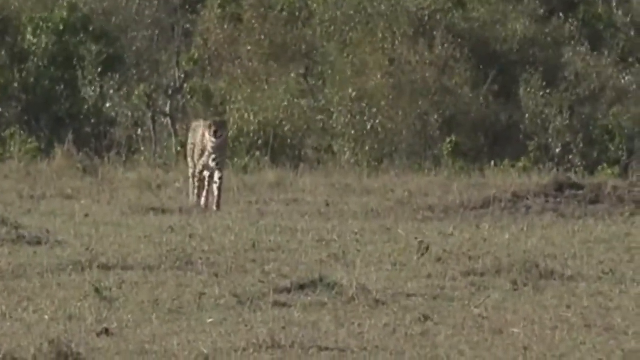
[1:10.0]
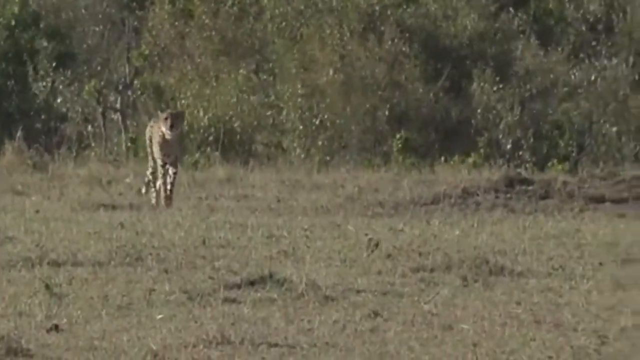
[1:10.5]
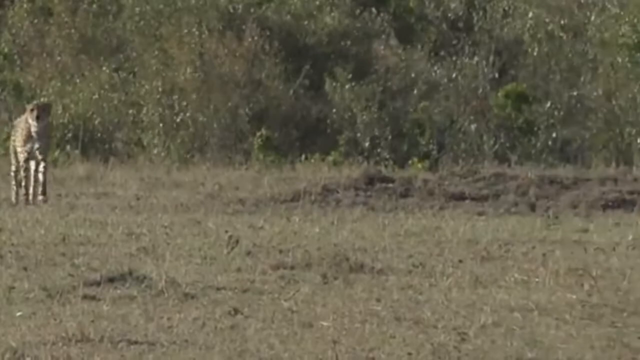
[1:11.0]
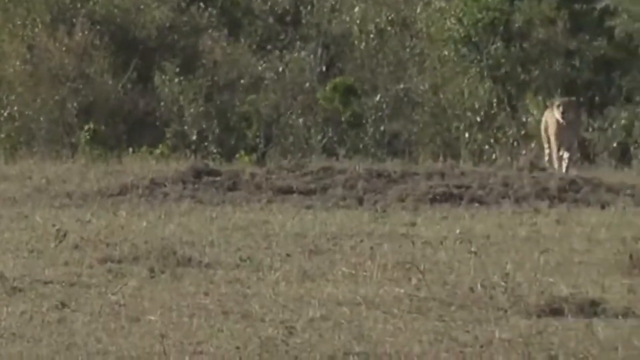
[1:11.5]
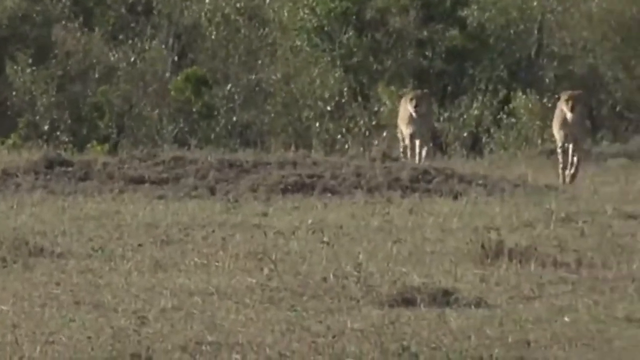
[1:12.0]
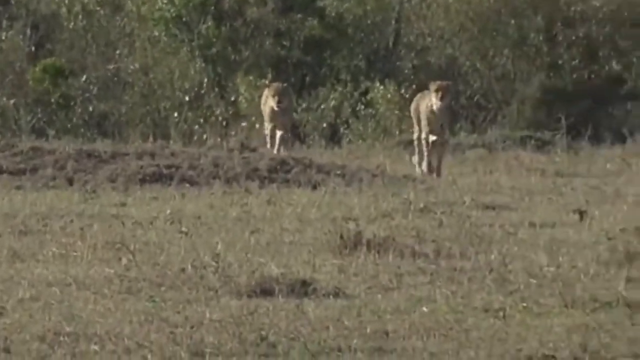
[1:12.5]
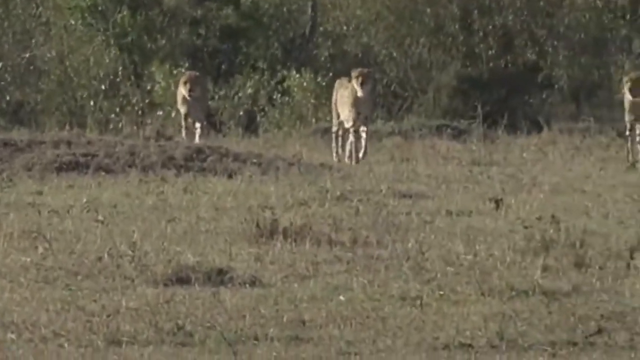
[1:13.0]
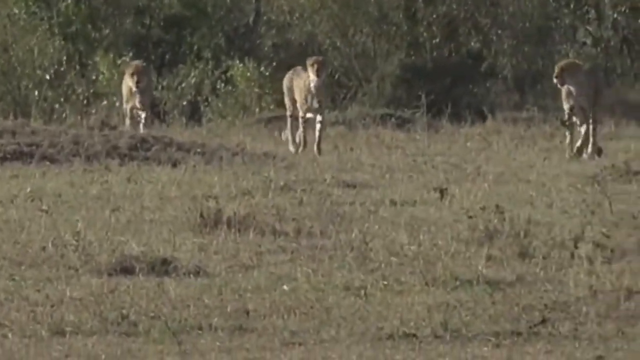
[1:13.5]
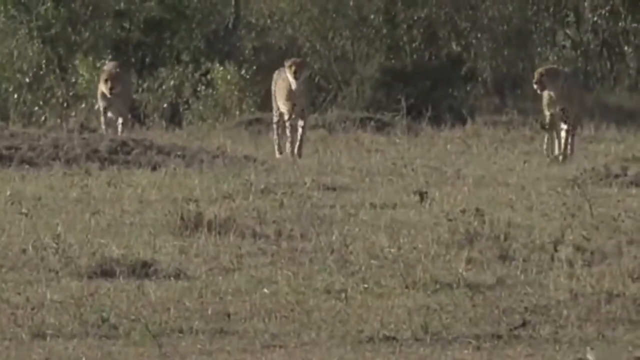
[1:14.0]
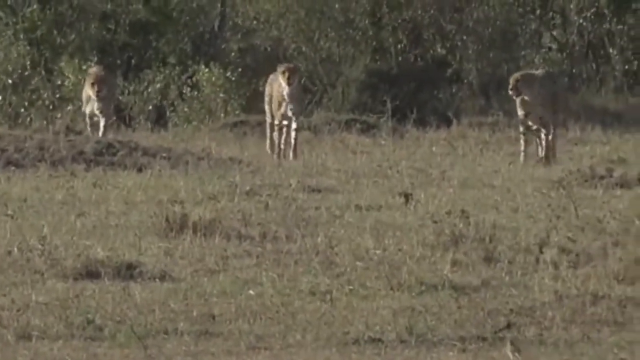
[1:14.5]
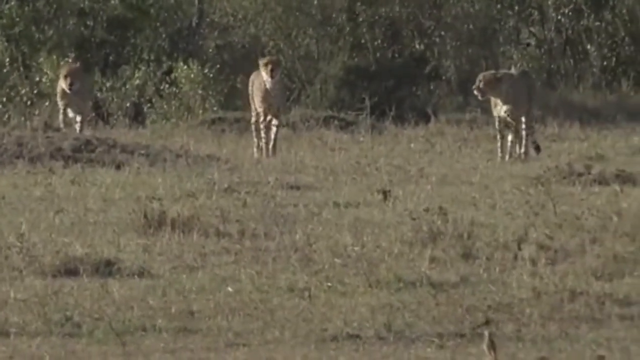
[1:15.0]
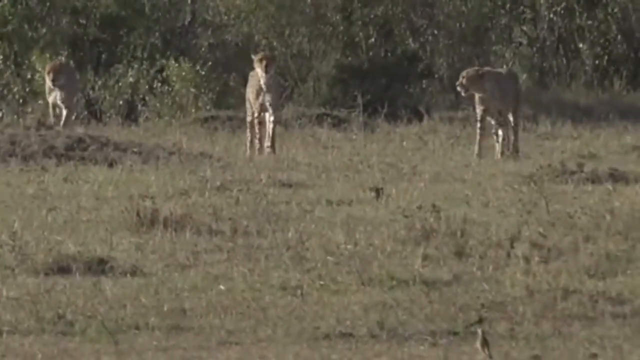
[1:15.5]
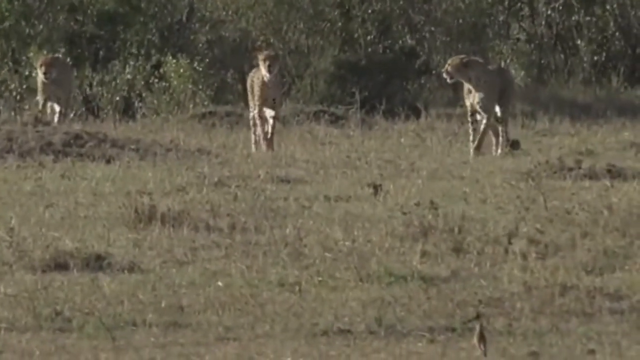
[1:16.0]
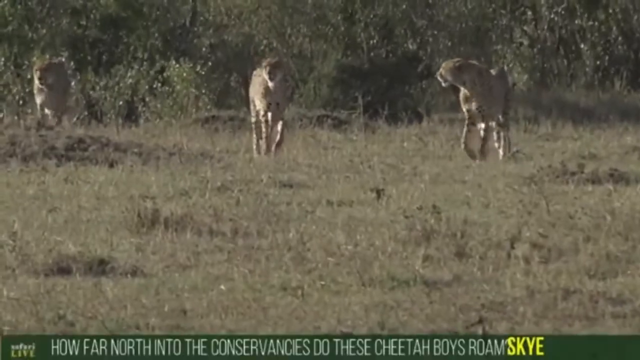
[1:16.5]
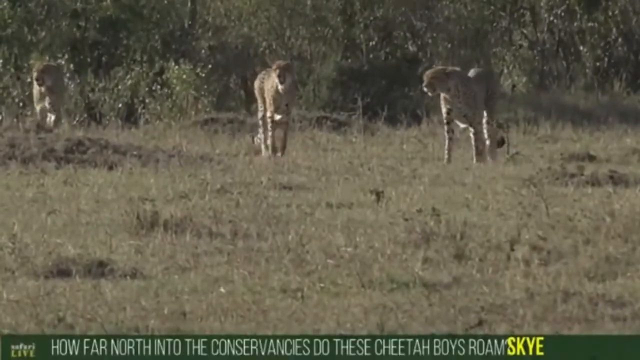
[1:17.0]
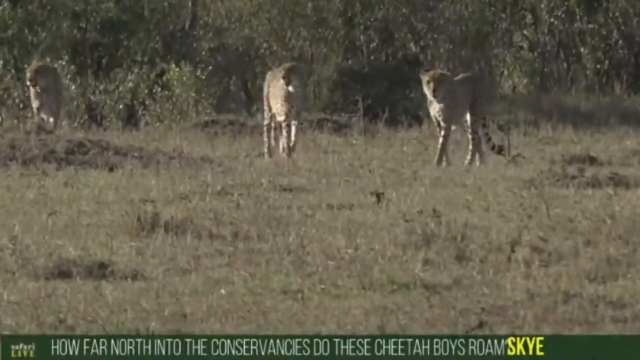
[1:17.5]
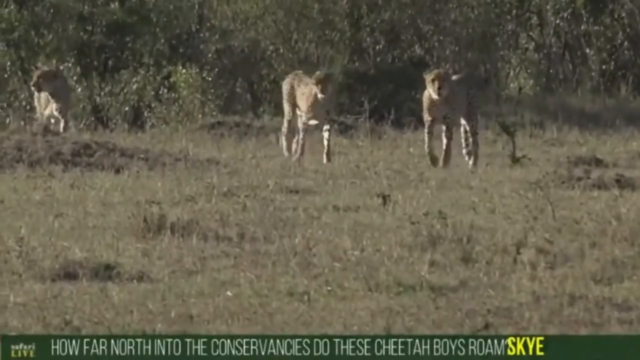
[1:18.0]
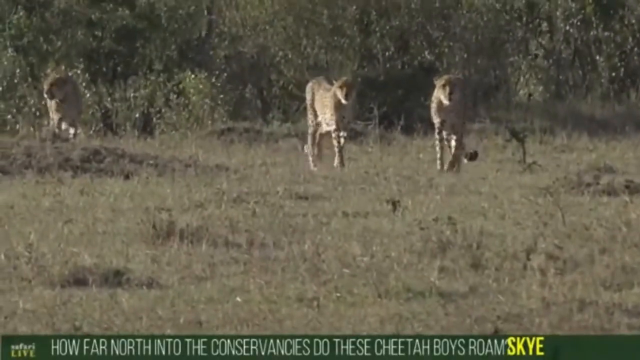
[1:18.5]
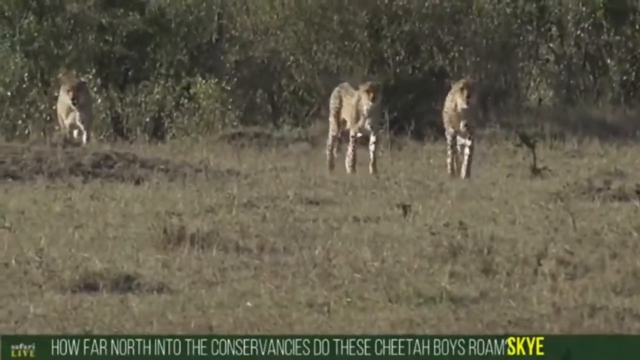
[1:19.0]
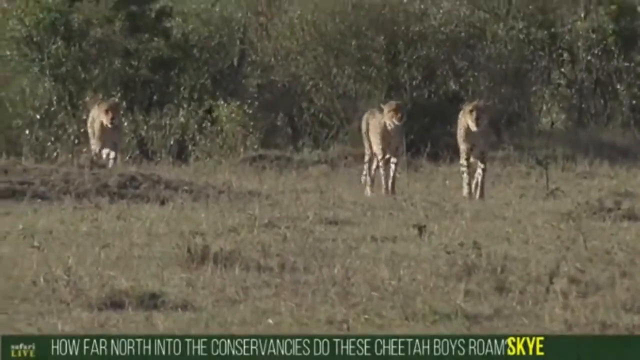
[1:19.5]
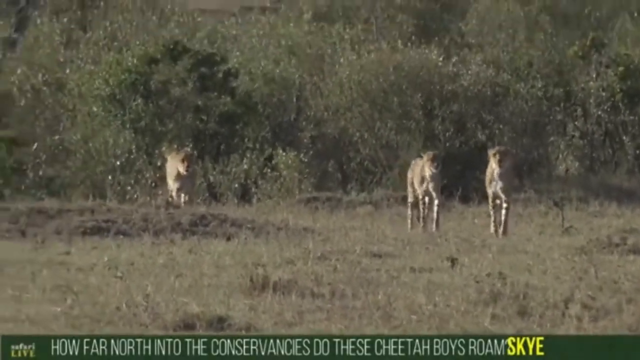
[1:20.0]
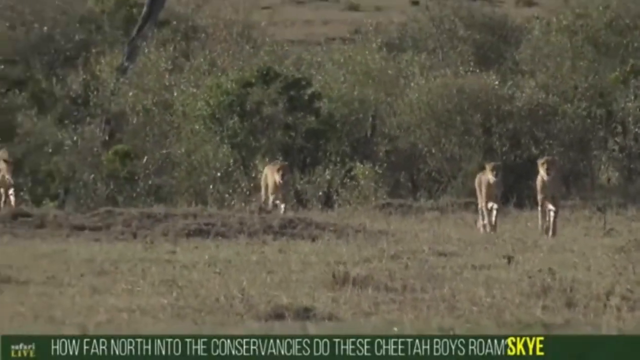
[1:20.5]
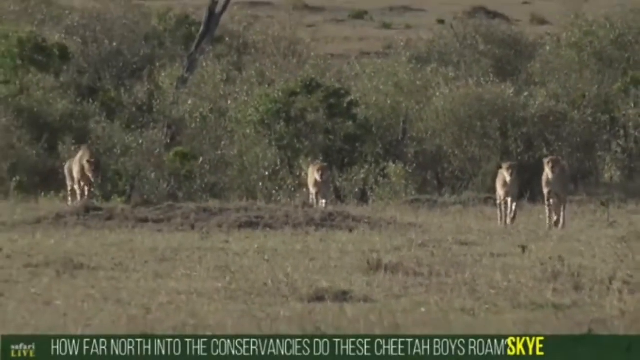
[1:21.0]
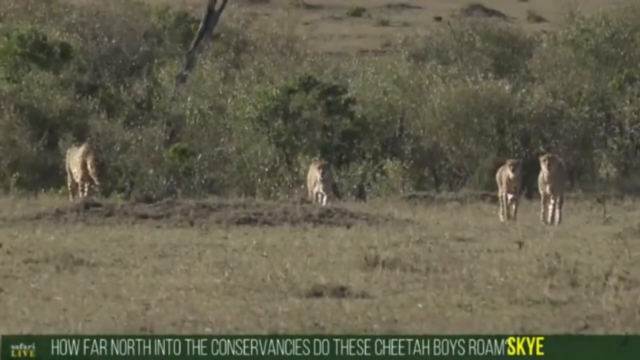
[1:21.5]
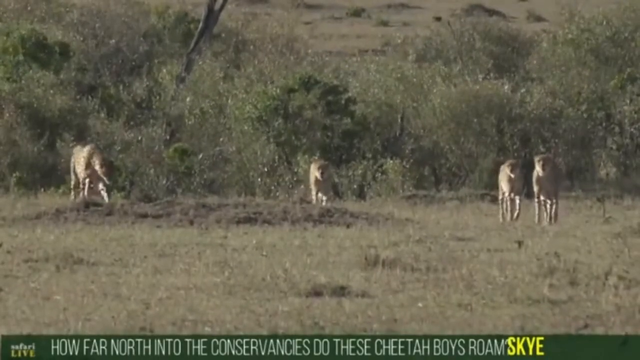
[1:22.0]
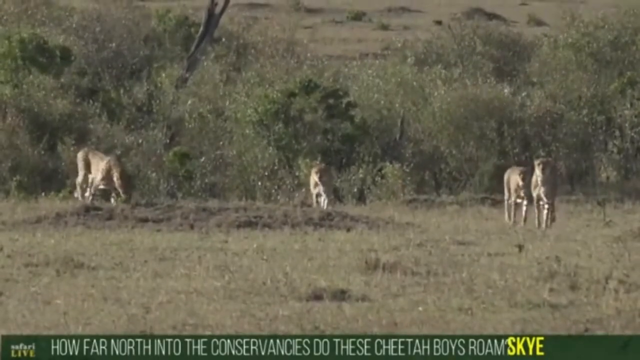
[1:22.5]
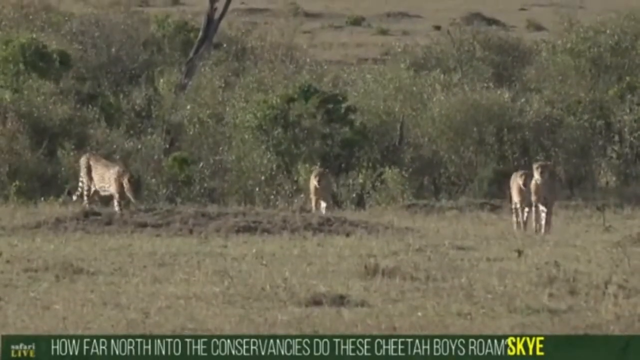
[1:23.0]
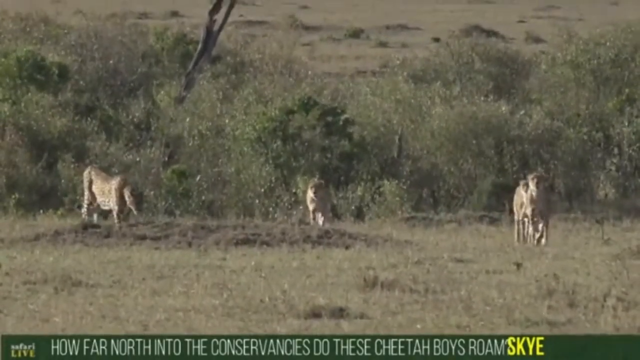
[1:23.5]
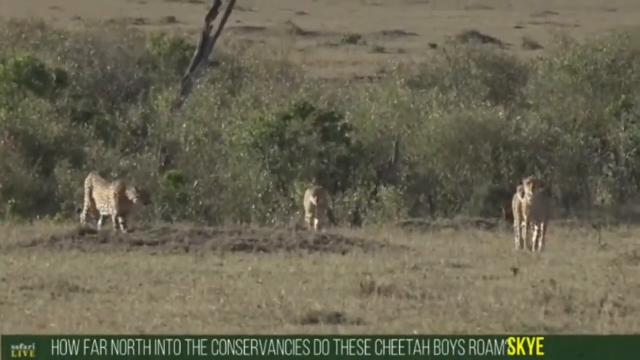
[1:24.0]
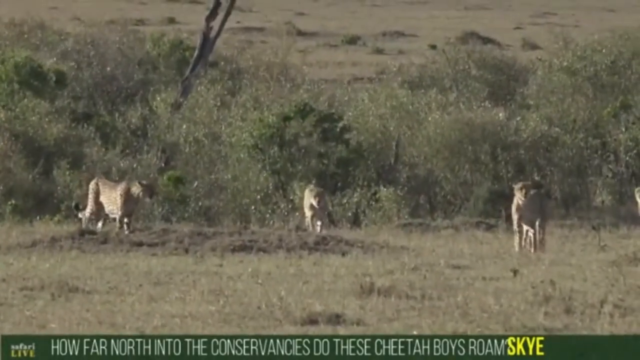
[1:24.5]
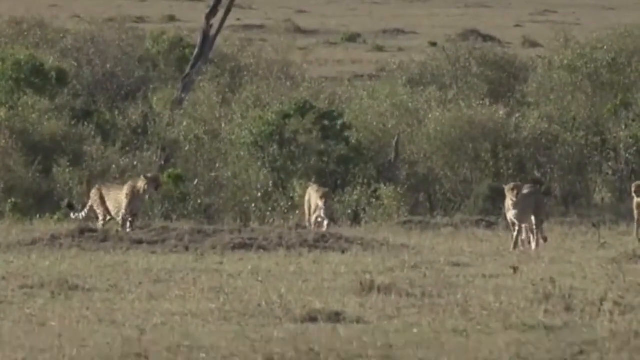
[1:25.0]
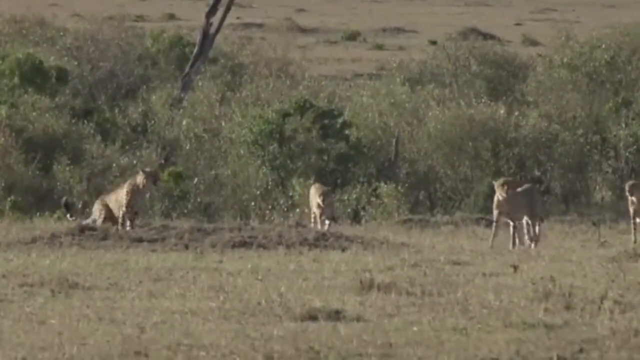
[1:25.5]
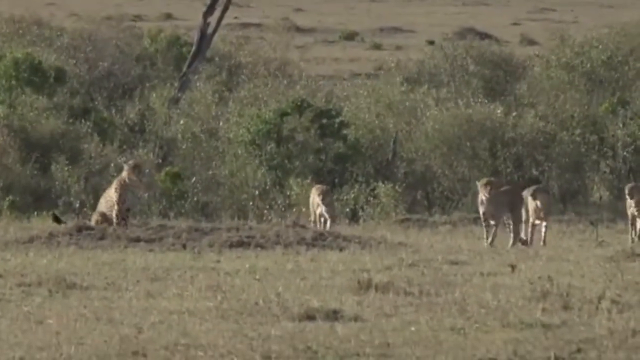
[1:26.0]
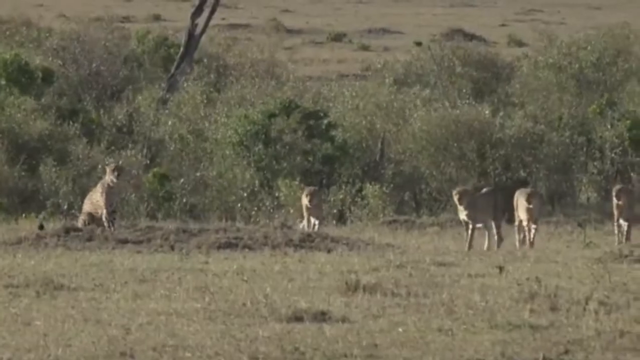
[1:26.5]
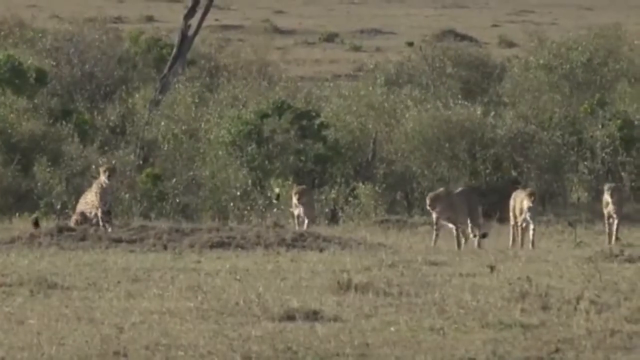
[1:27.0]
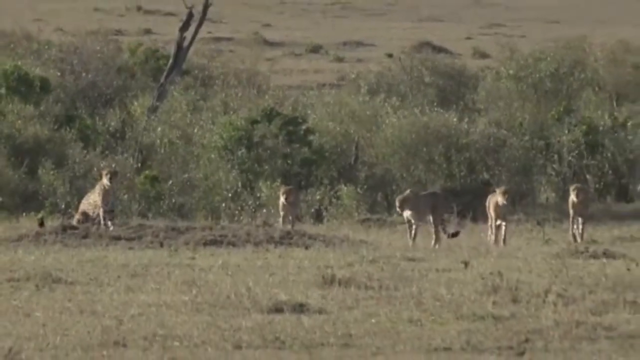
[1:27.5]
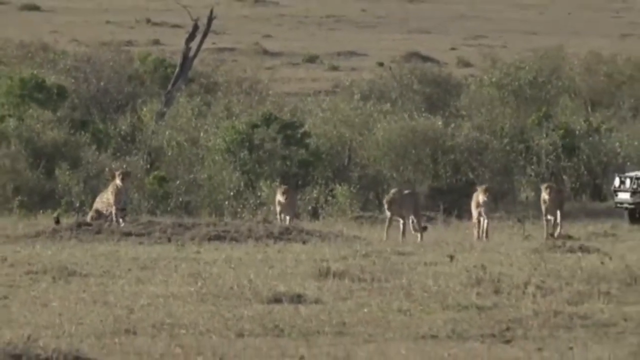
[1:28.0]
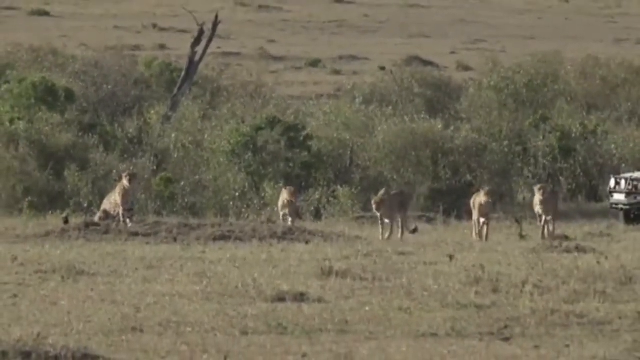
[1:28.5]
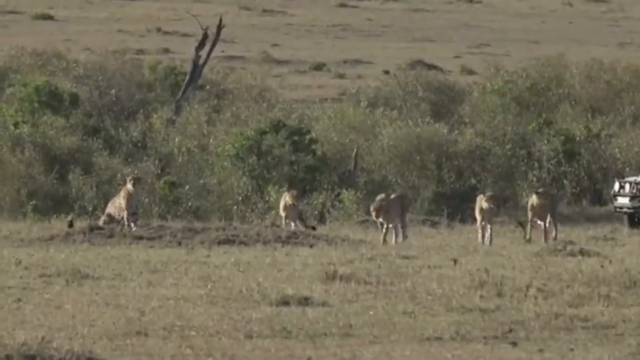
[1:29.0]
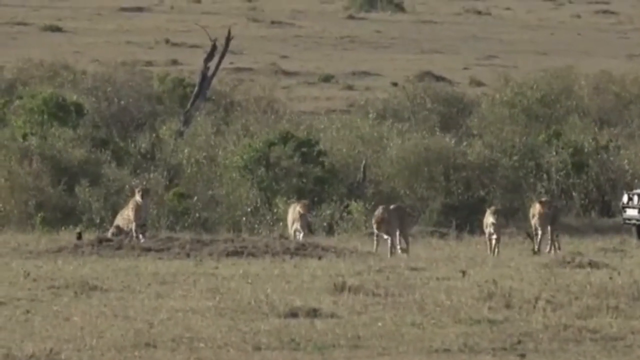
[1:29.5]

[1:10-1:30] A zoomed-in view shows a cheetah walking across the savannah. The camera pans to the right, revealing another cheetah and then another, walking toward the general direction of the camera, and then one more. They are quite spread out, and in total there are five cheetahs. On the right of the image is the front bonnet of a vehicle, with its lights and number plate visible. In the distance it looks almost like a desert. A lone tree with no visible foliage, like a stump sticking out, is on the left-hand side just behind the cheetahs. One cheetah appears to be almost seated, having walked slightly toward the area from which they are being filmed, while the other four are still walking toward the camera.